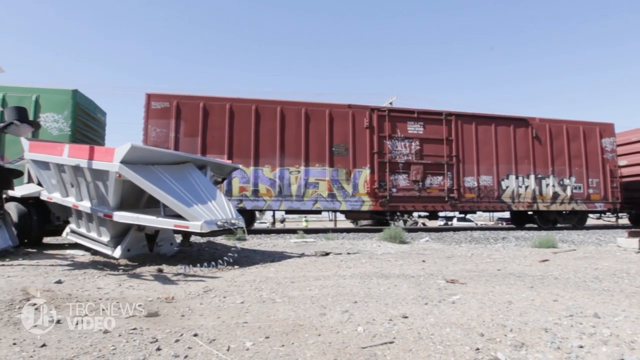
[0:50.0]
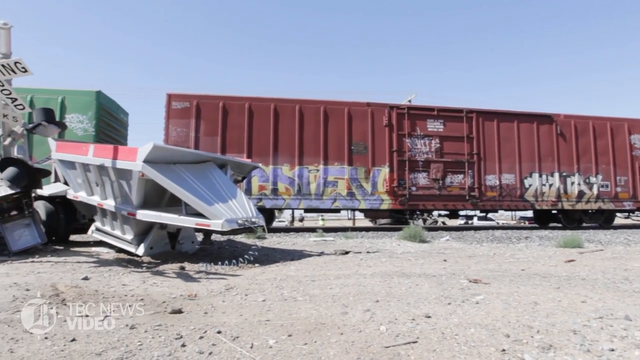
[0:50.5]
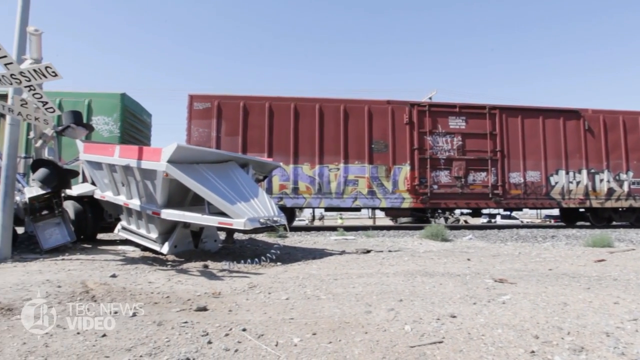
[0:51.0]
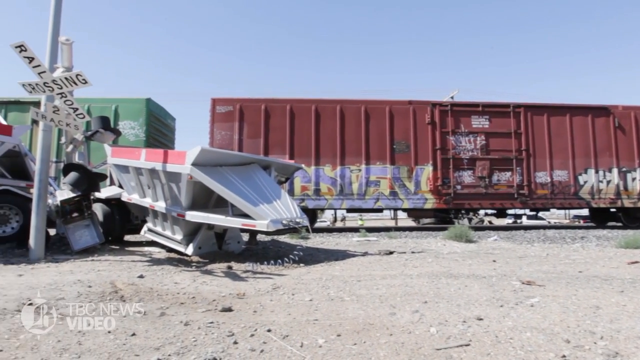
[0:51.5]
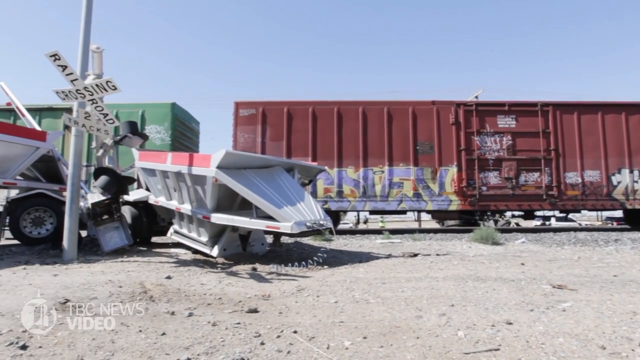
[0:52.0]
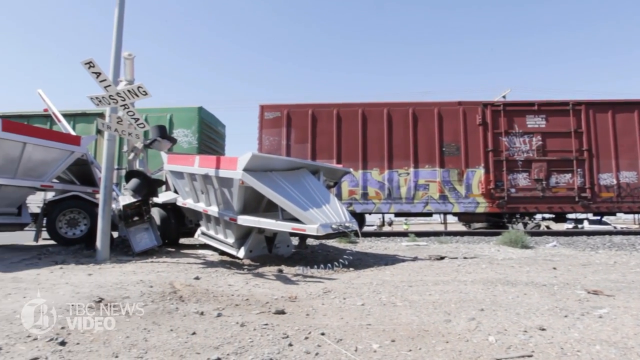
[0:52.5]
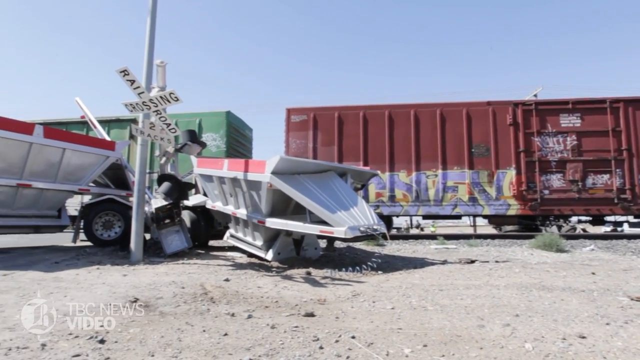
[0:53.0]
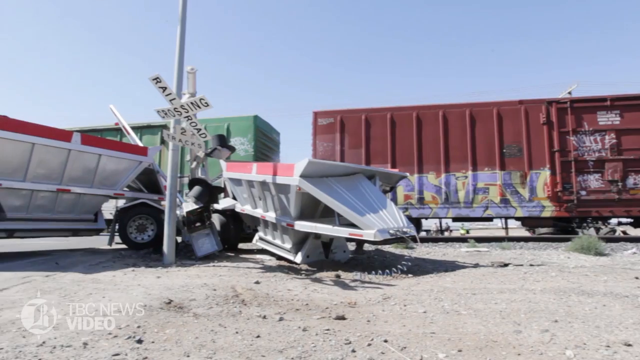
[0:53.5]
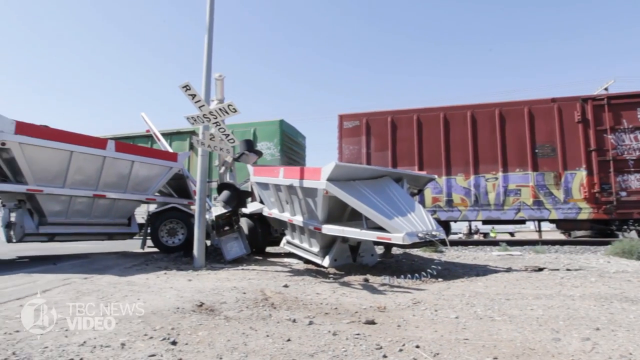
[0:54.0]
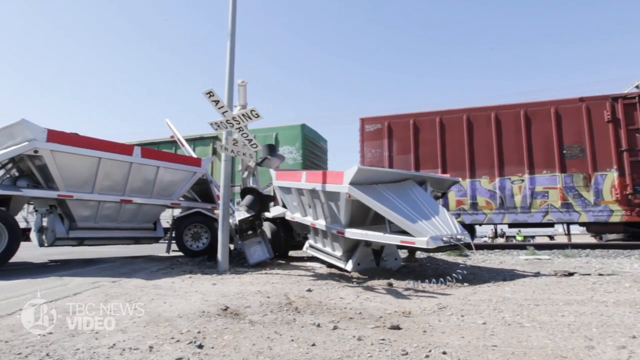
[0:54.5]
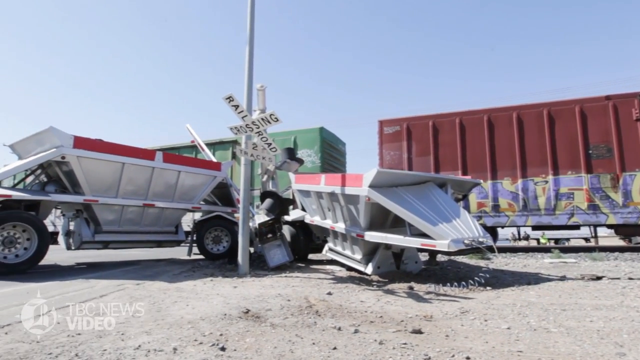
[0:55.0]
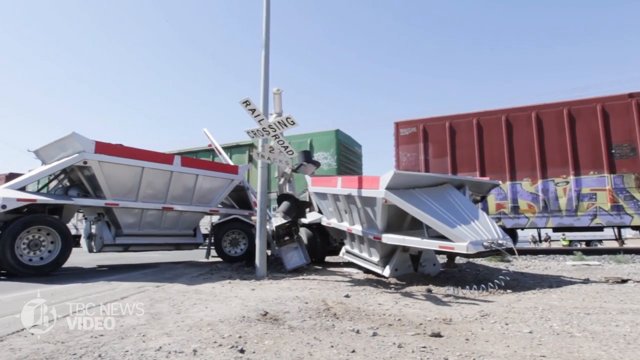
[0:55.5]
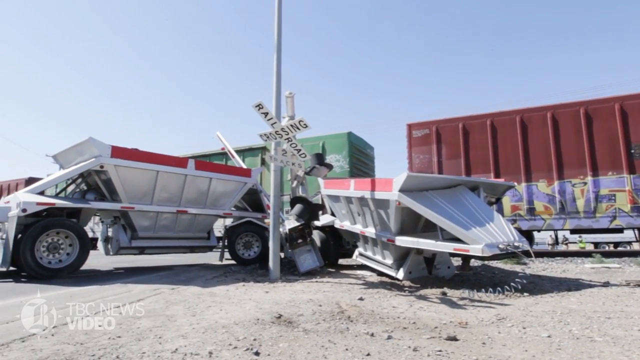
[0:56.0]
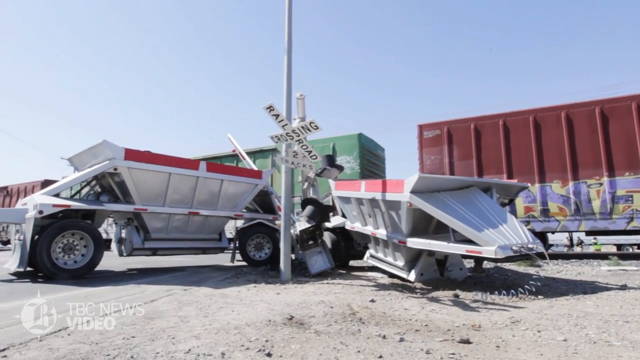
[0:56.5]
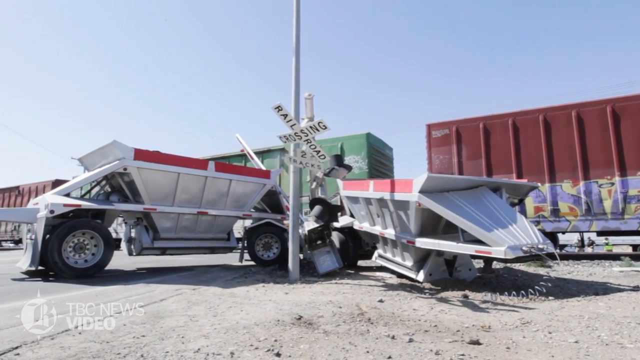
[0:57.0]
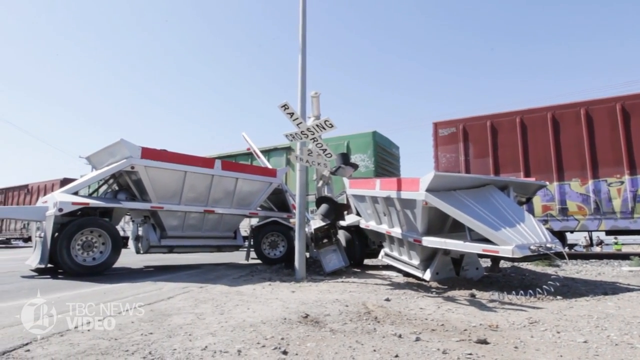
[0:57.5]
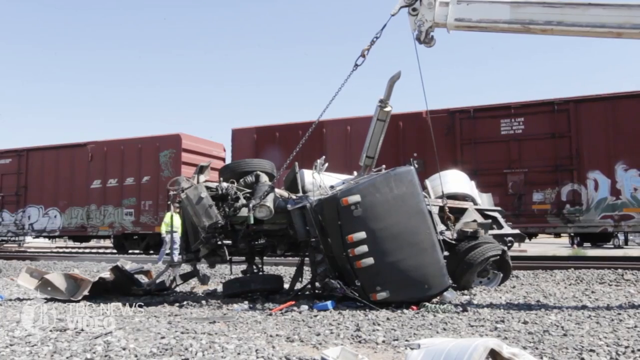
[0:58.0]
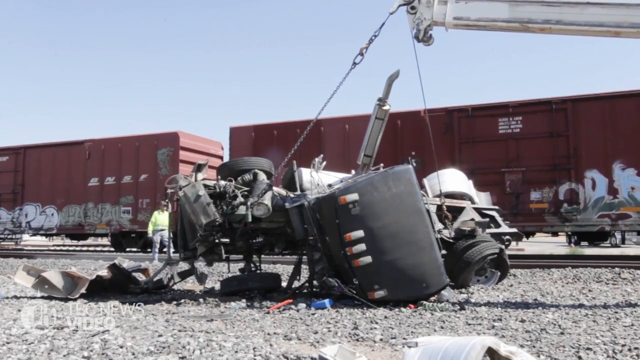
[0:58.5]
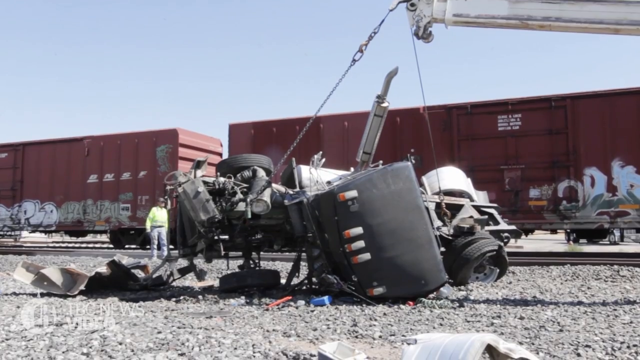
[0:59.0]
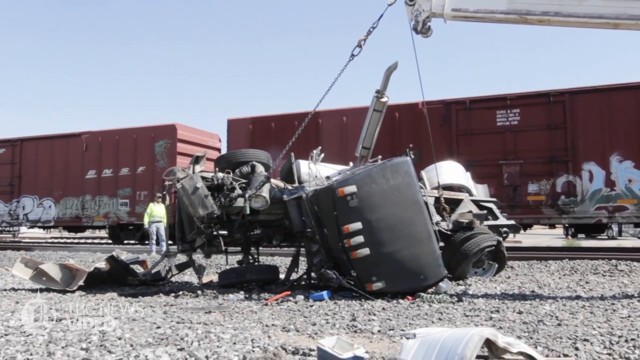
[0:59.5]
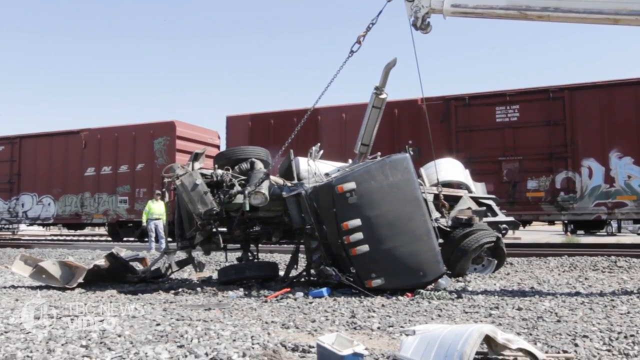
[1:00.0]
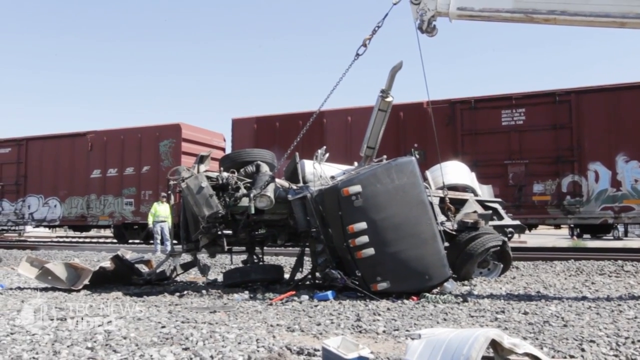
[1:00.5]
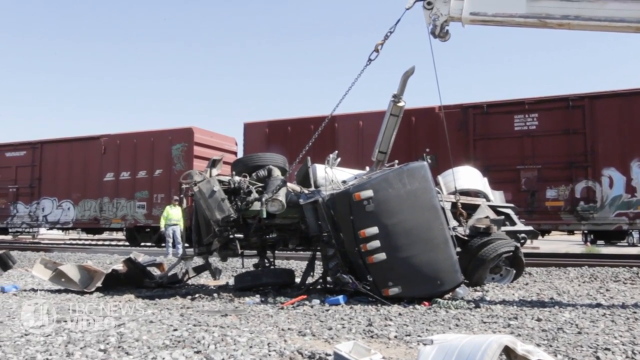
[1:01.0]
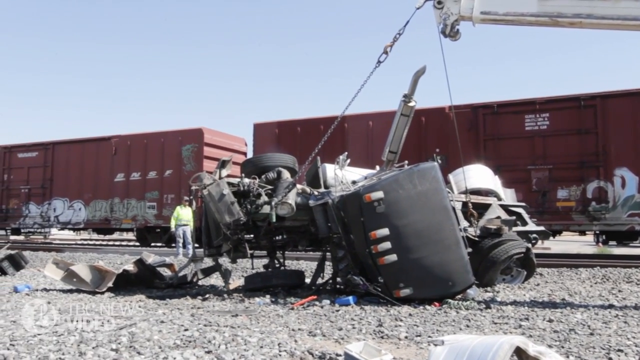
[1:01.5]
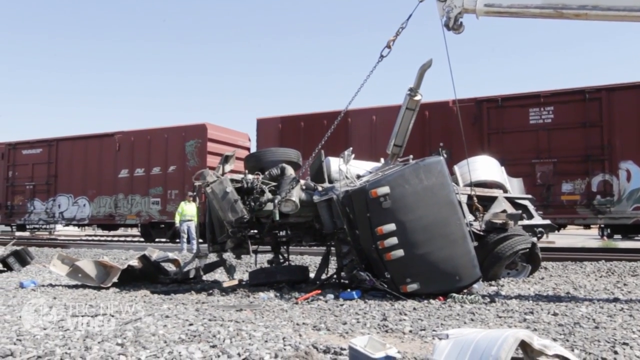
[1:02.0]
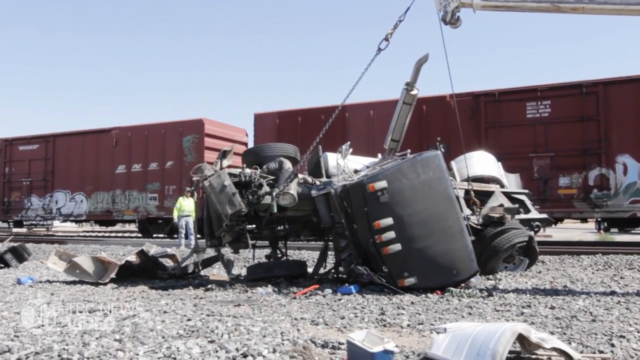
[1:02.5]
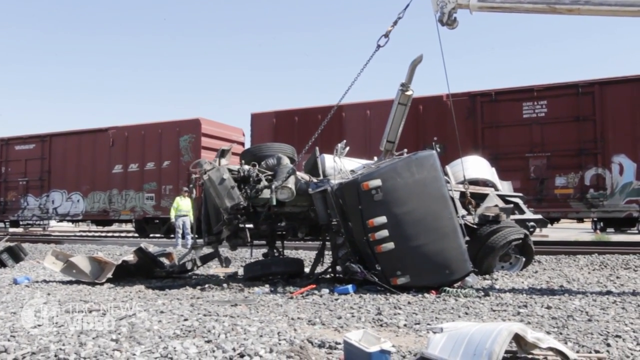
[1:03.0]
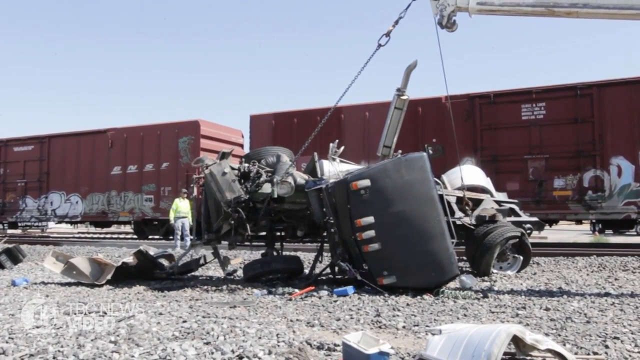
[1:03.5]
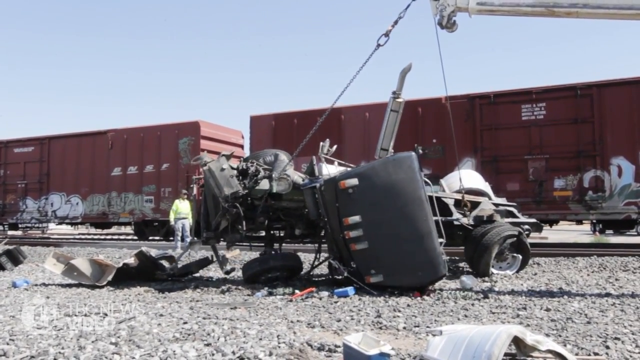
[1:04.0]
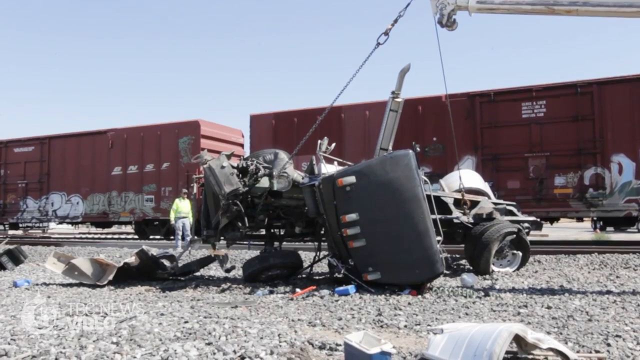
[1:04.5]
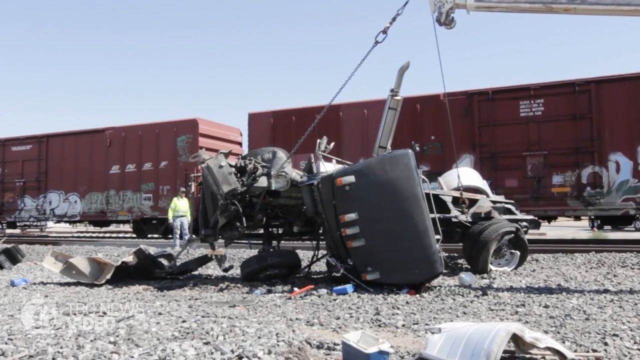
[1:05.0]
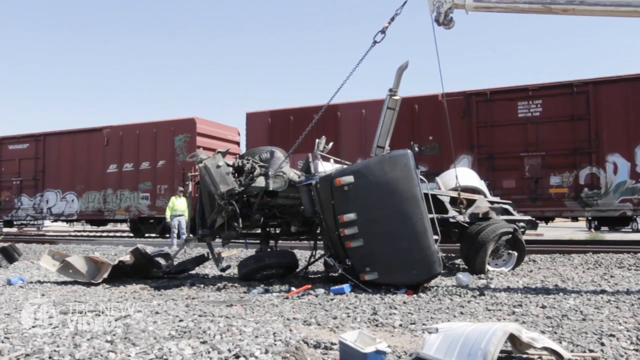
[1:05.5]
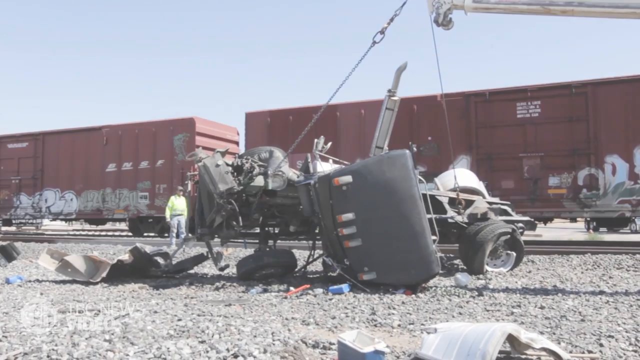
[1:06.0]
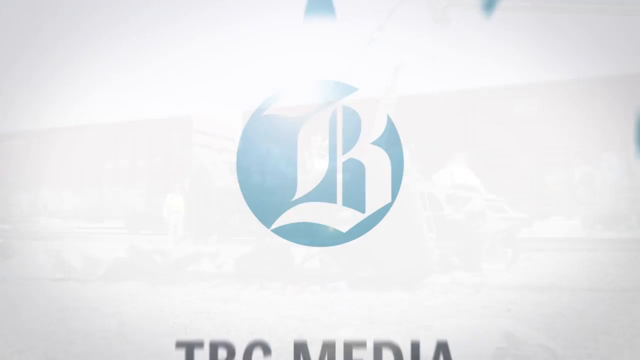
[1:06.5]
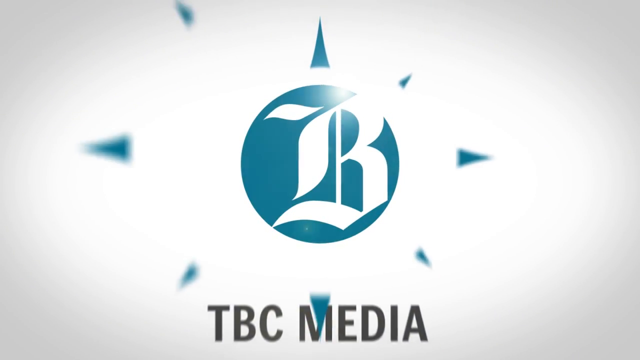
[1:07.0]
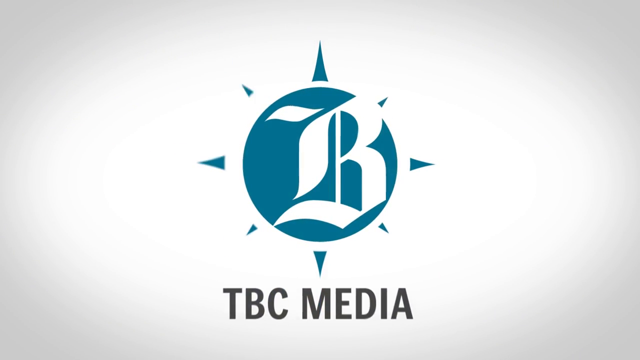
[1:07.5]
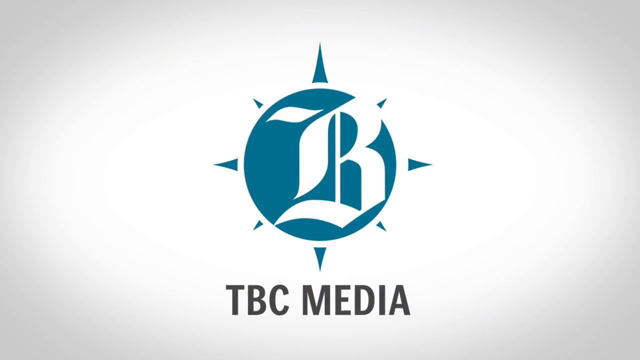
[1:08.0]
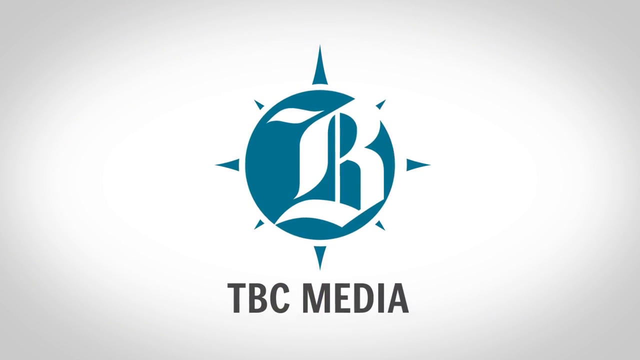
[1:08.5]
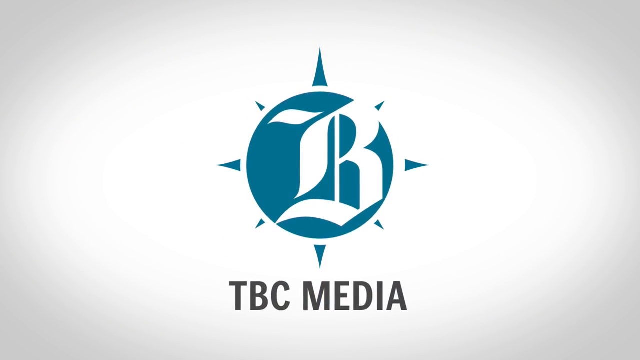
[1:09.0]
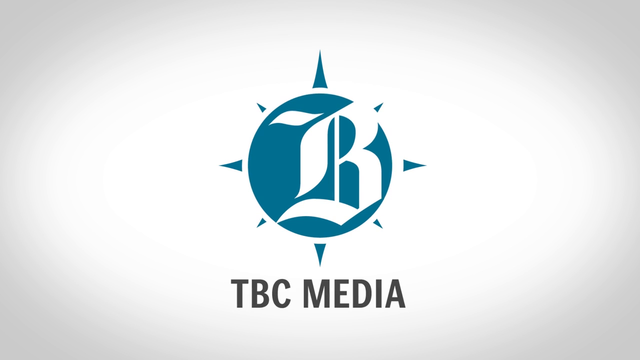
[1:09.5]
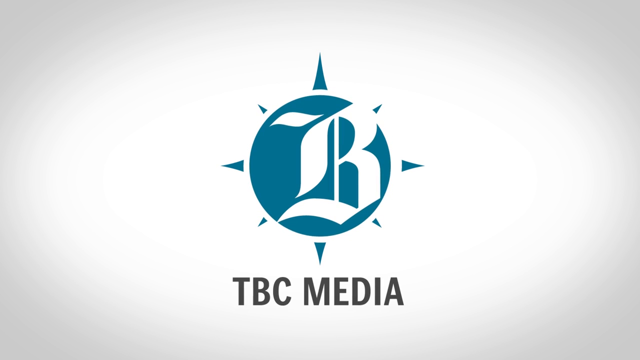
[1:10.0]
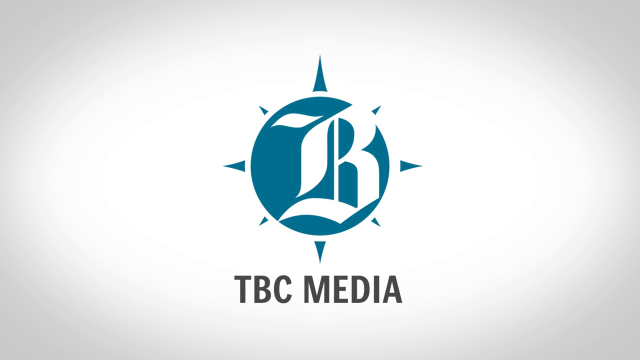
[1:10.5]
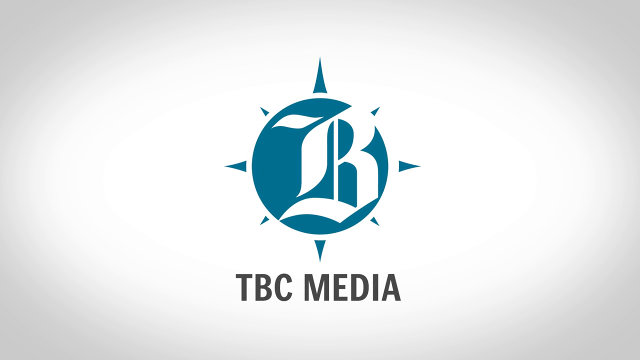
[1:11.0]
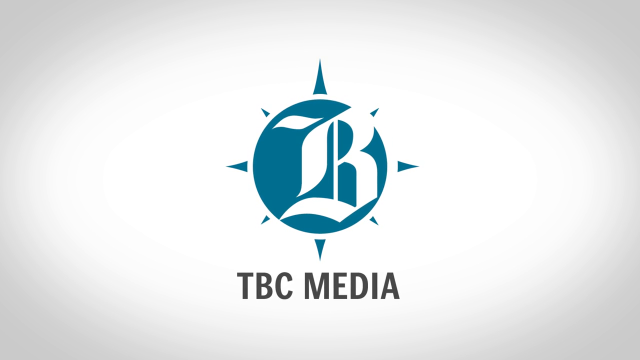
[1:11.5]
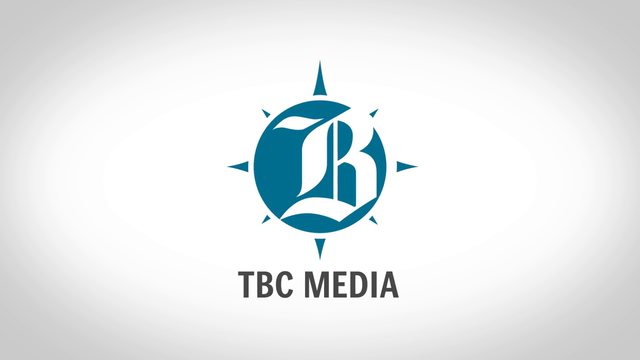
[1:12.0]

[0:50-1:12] The truck is shown from several angles, with another part of it moved next to its bow. Another truck is removing parts of the wrecked truck from the train's lane, clearing up the mess so the train can move. Not many people are there watching, and there is no sign of a driver on site. The truck appears to have been just an inch from the train. The train is intact, with no sign of damage or wreckage on it. A photographer is taking pictures of the railway crossing, and there are two signs written on the poles.